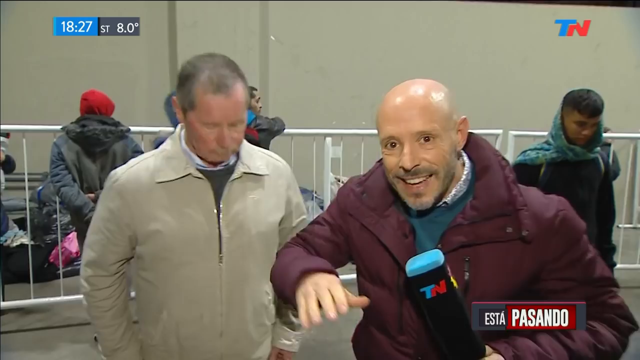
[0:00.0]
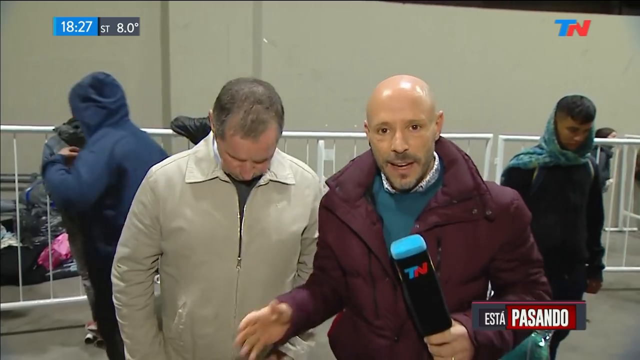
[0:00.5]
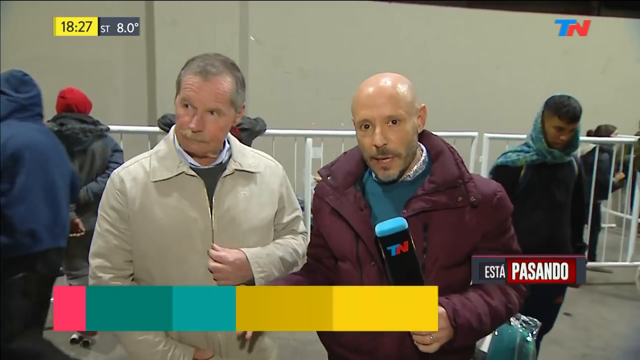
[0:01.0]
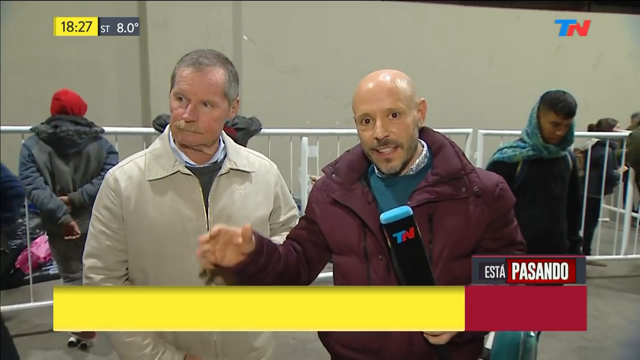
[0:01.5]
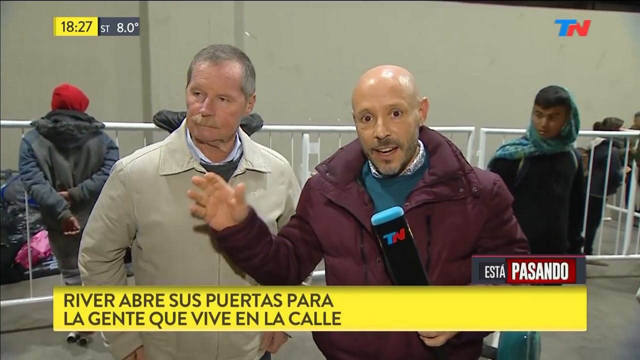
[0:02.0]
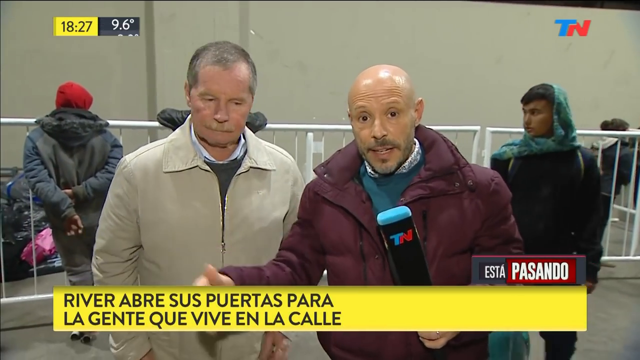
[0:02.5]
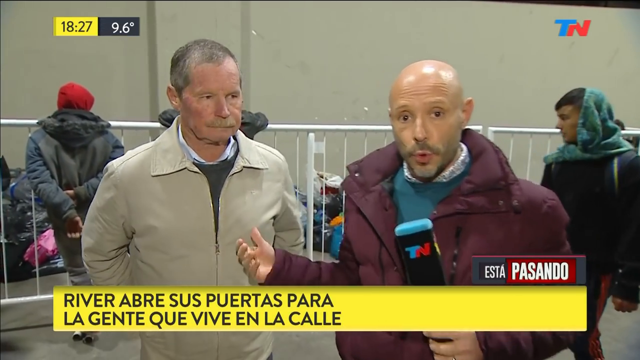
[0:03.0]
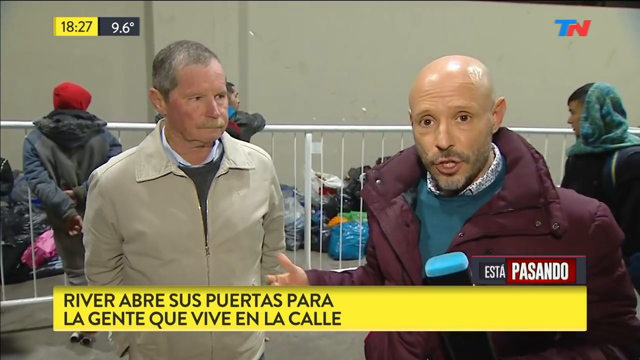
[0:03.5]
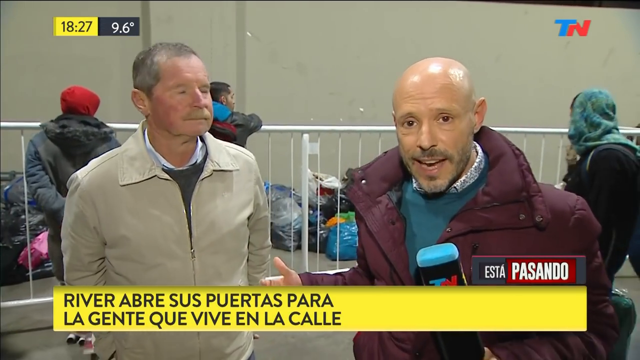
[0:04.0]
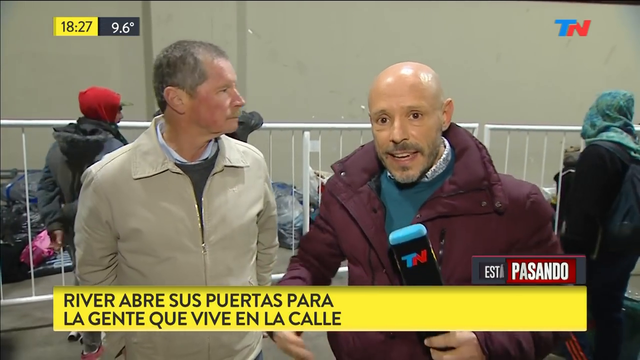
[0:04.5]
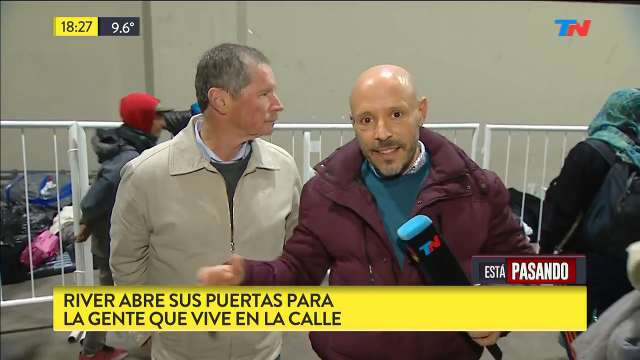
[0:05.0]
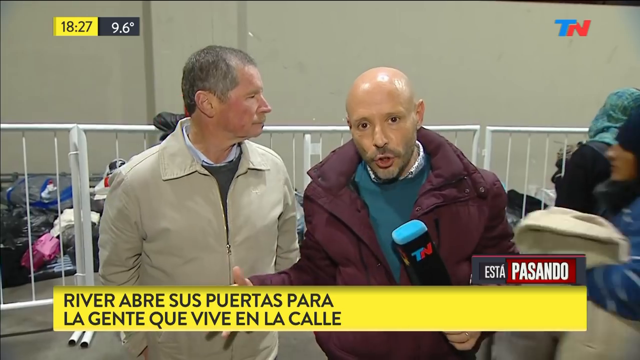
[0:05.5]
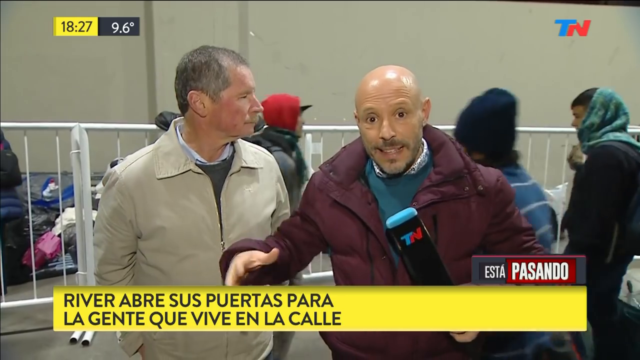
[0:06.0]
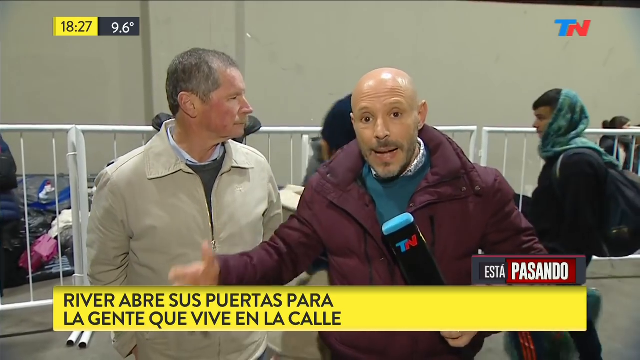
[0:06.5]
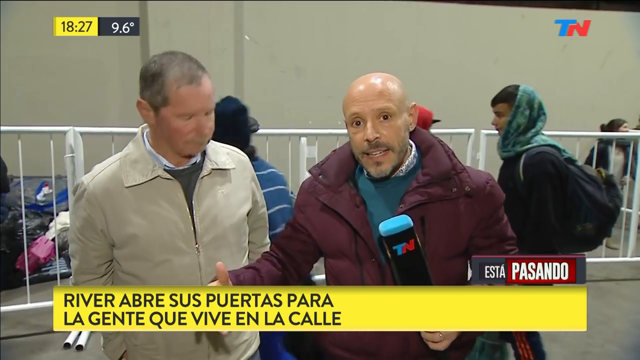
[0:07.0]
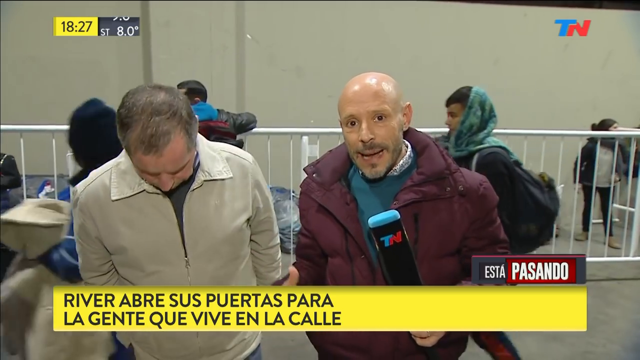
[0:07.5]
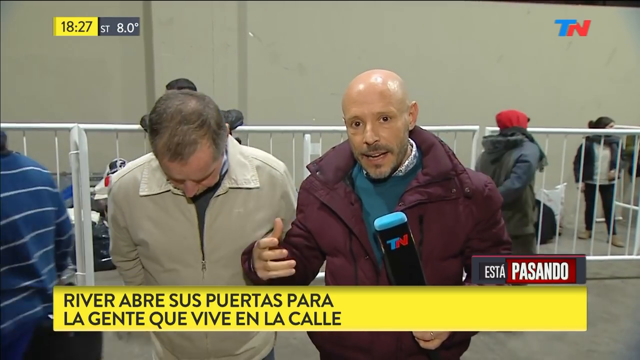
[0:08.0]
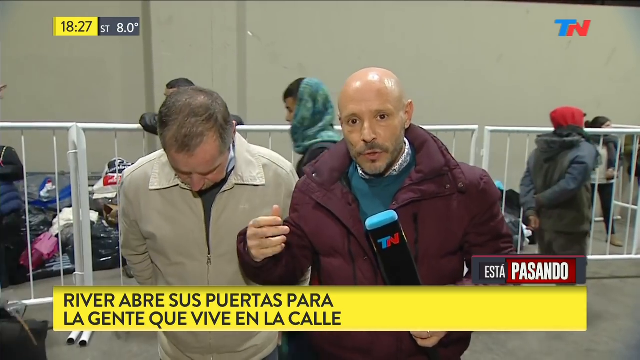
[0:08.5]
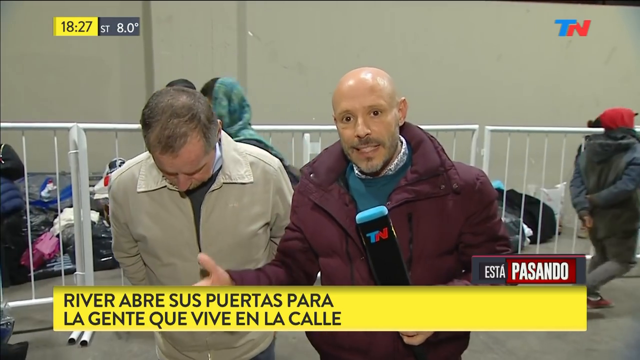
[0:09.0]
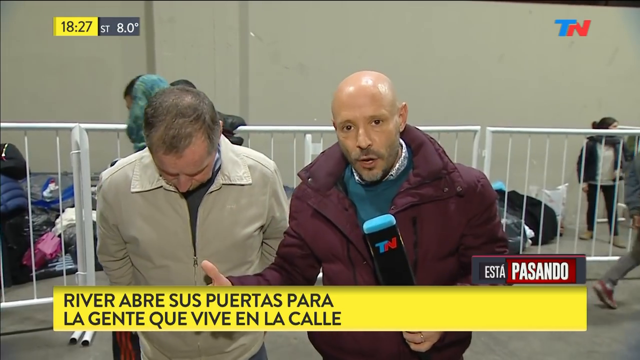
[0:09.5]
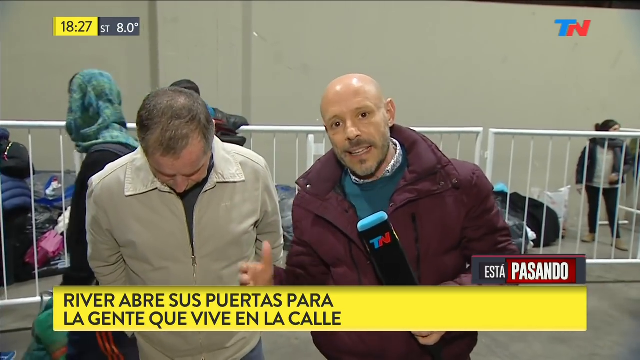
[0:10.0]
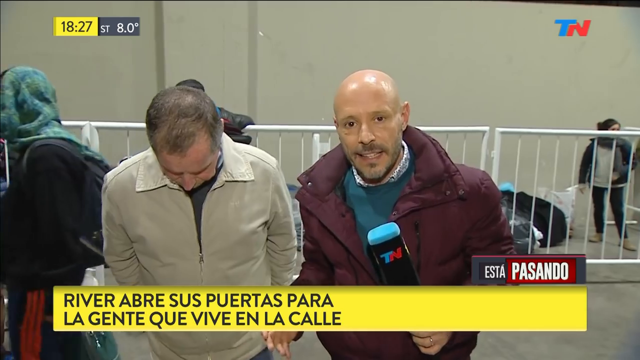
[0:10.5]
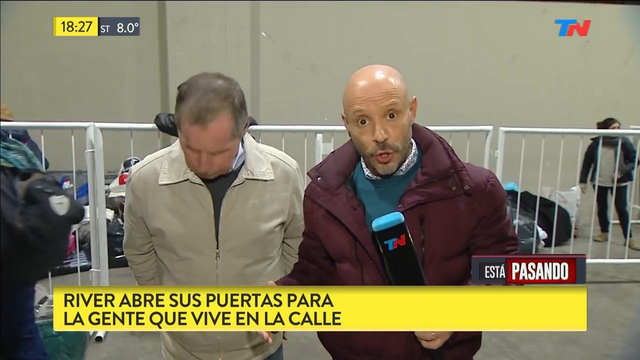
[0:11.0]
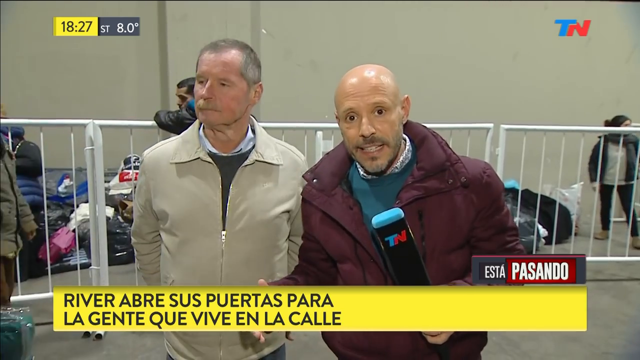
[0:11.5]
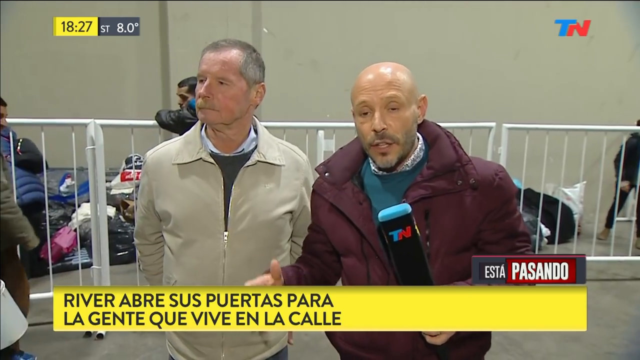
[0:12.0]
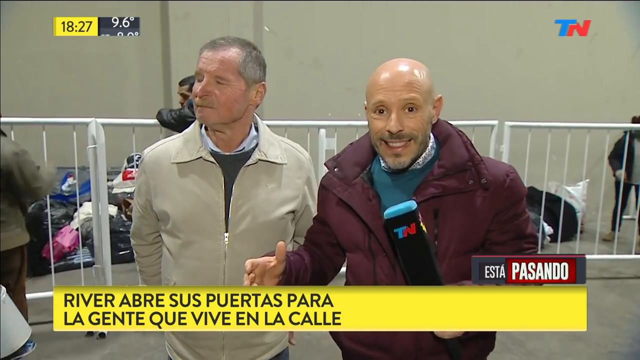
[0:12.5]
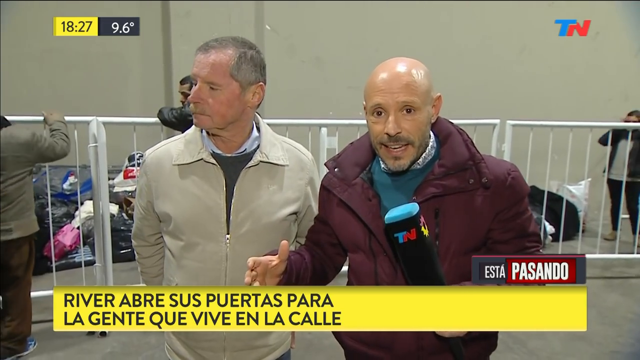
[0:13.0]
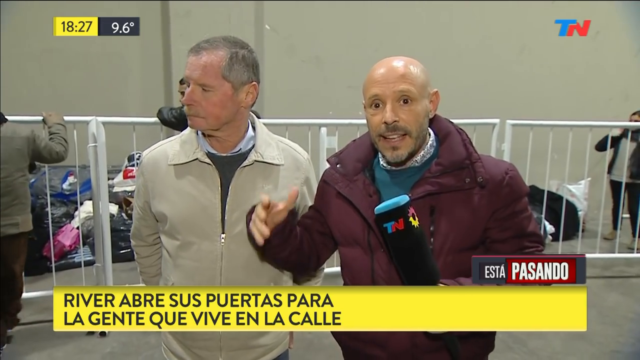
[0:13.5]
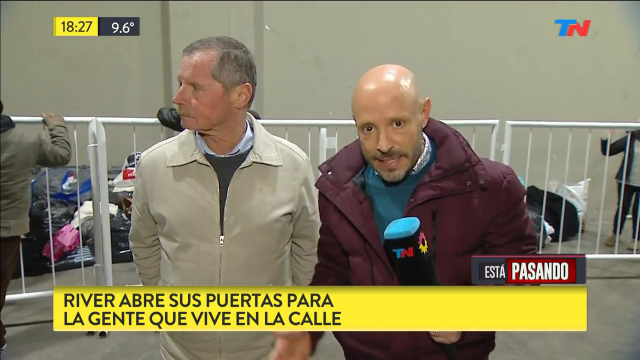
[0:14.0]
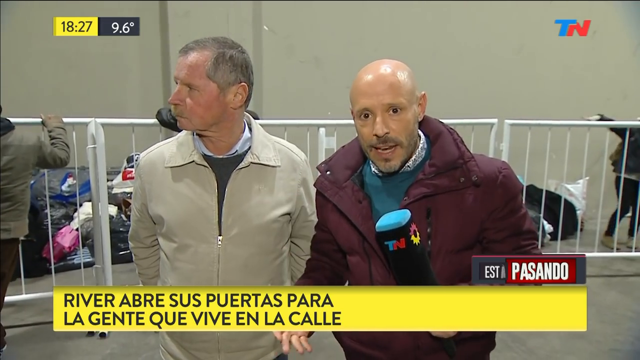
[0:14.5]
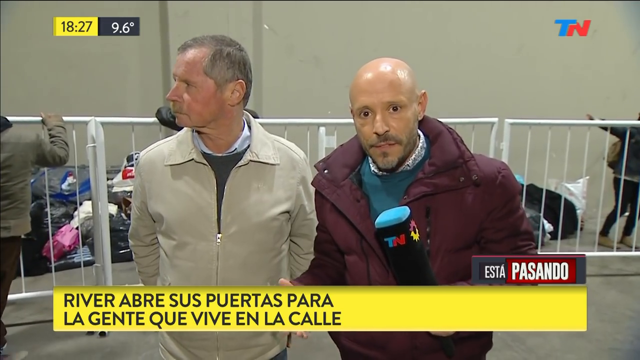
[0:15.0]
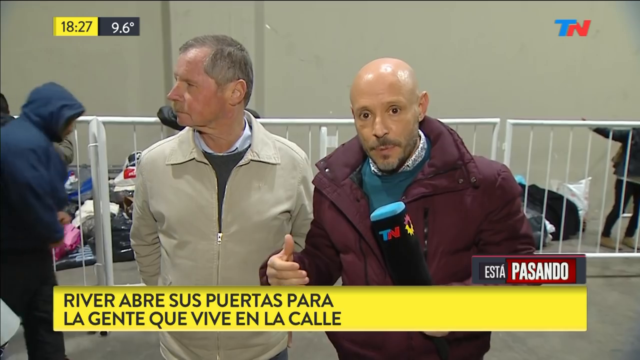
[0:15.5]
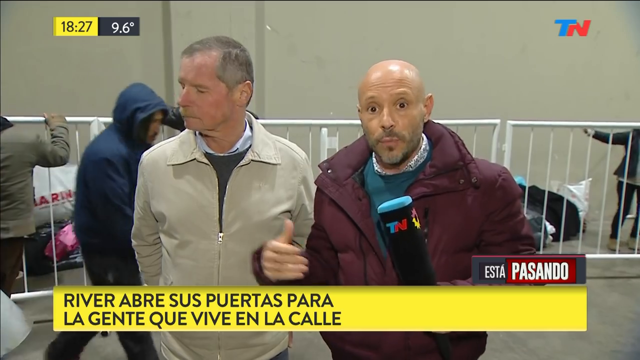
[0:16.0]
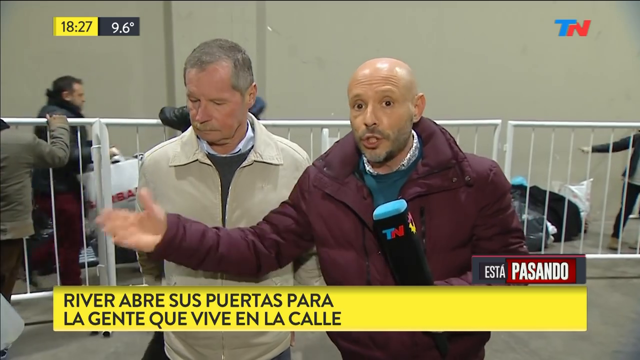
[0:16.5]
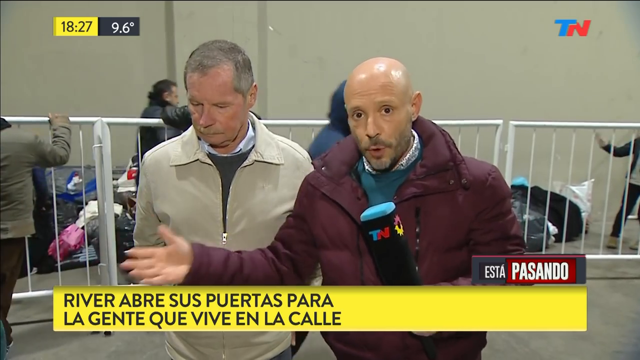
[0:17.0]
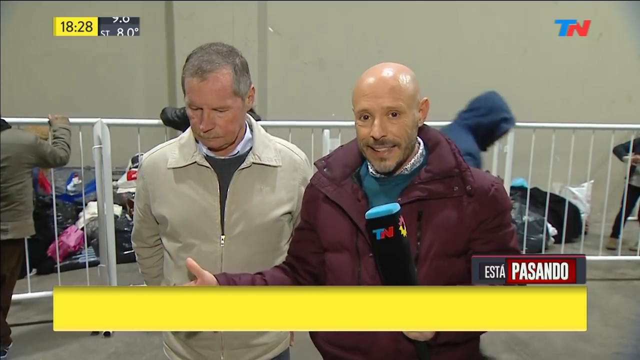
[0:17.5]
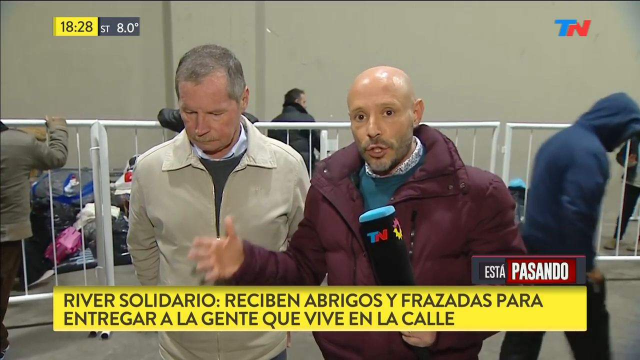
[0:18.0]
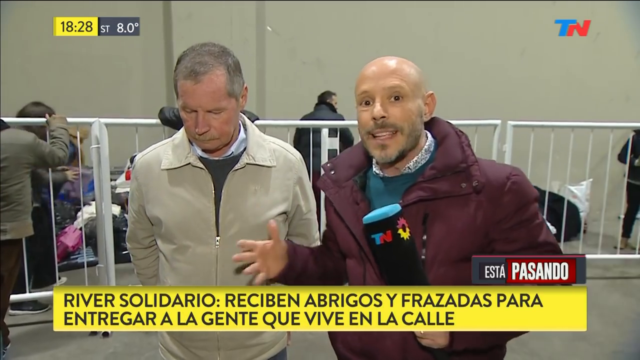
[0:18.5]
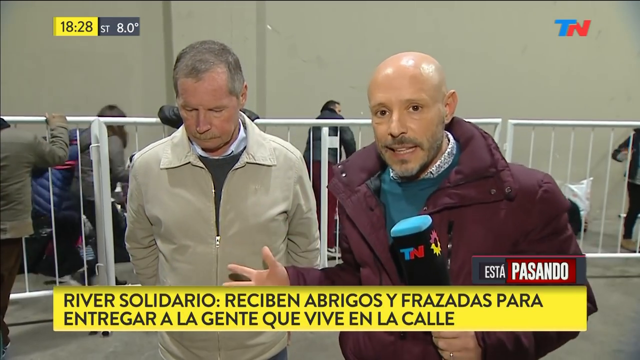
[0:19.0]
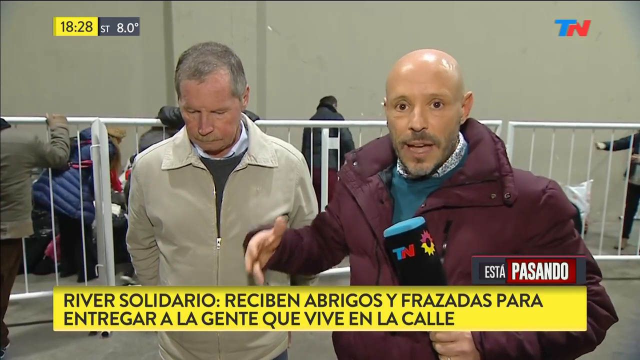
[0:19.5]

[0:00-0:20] The setting appears to be a place for people who live on the streets, possibly a shelter or a street area protected with gates; it is unclear which. People are in the background and seem to have received some things, including blankets. A bald man in a maroon puffer jacket, with a green sweater and apparently a shirt underneath, holds a microphone marked "TN," possibly the name of the channel or program. He stands with another man who wears a jacket over a gray sweater and a white shirt. This man seems older, possibly about 50 to 60 years old, while the presenter appears to be about 40 to 50. Other people are in the background behind them.